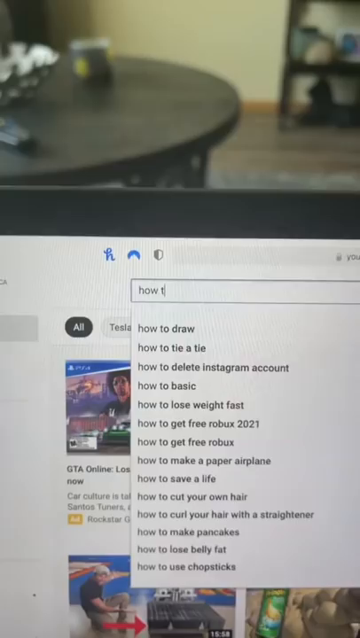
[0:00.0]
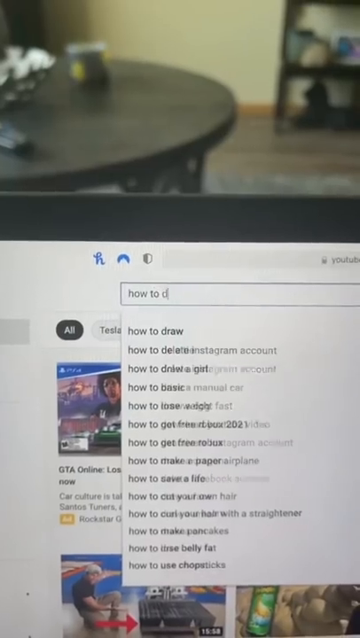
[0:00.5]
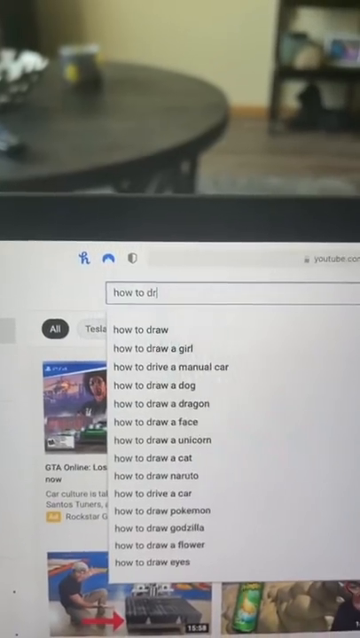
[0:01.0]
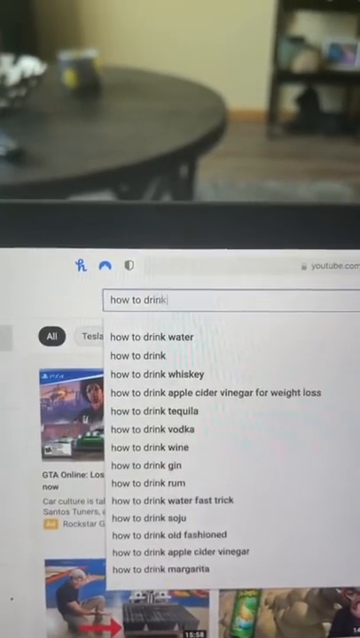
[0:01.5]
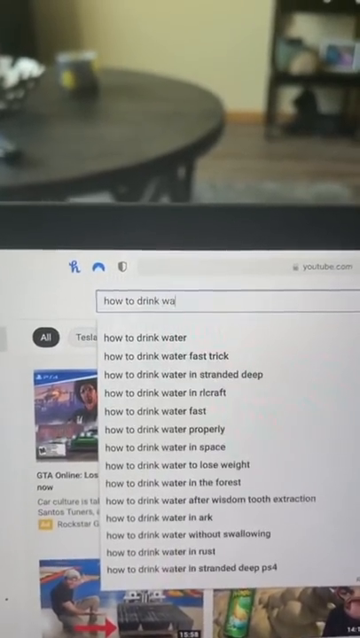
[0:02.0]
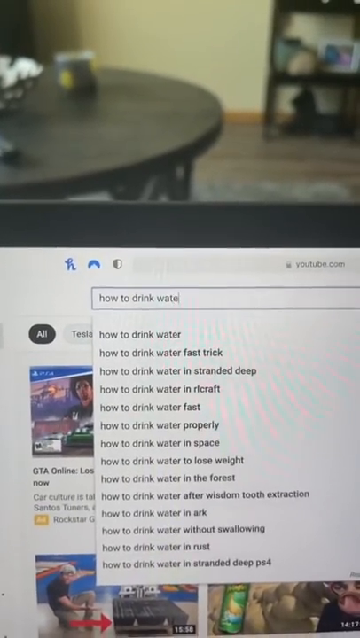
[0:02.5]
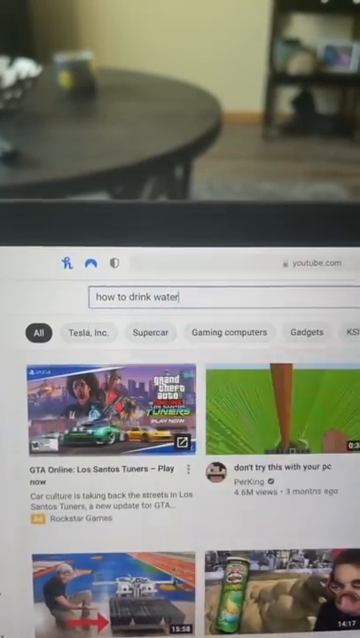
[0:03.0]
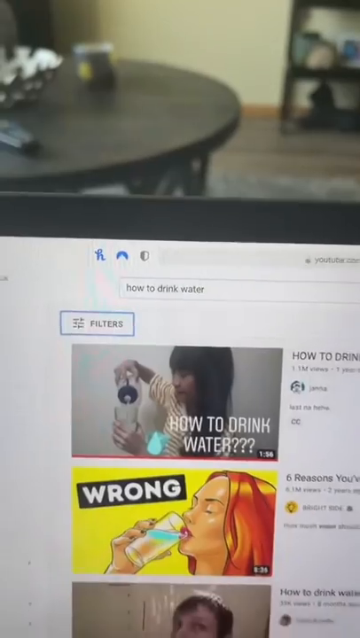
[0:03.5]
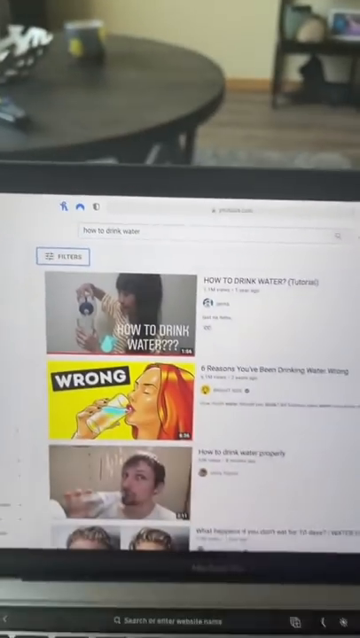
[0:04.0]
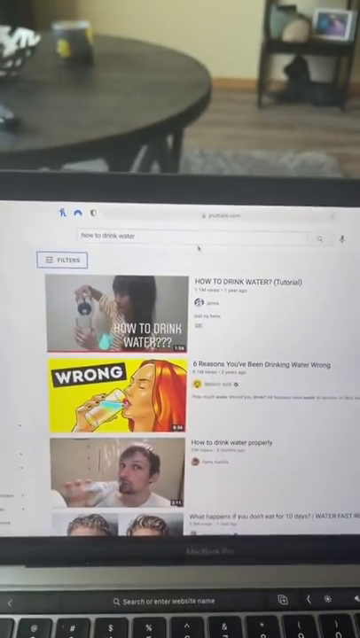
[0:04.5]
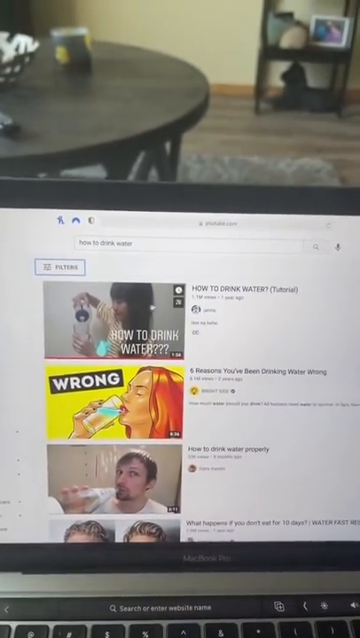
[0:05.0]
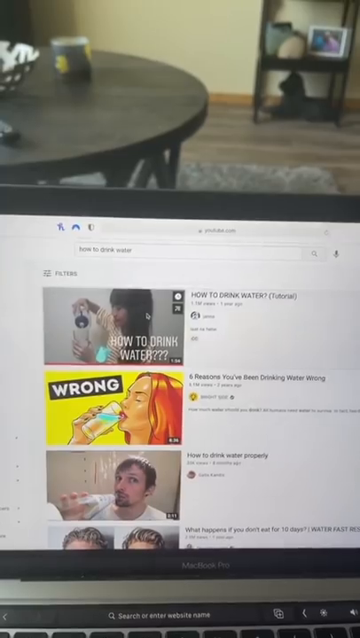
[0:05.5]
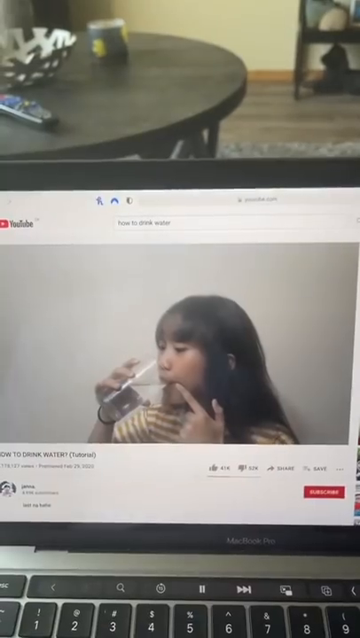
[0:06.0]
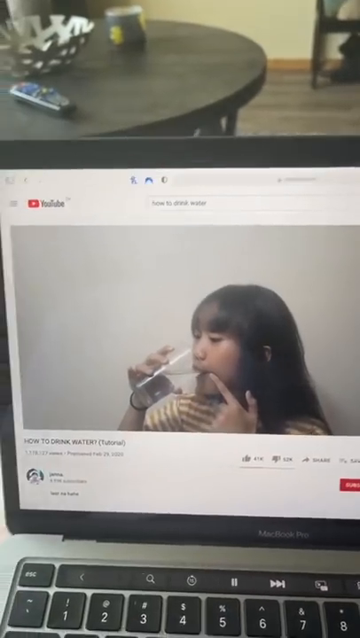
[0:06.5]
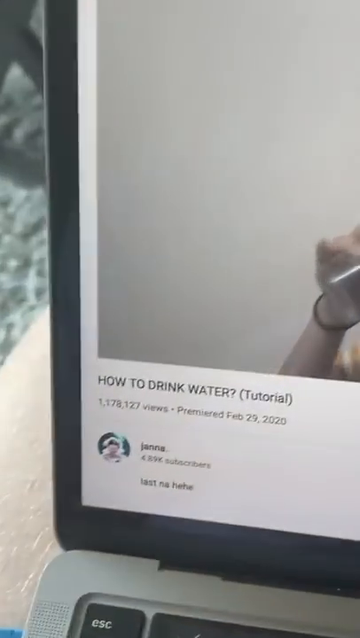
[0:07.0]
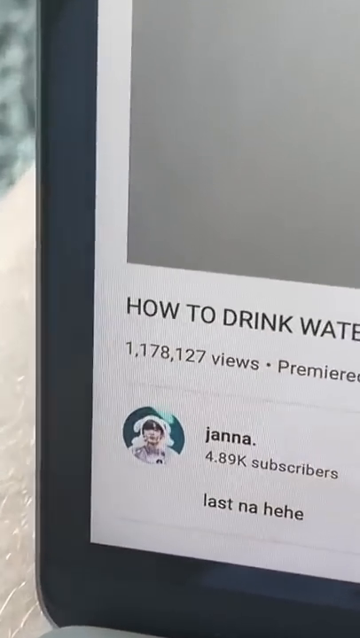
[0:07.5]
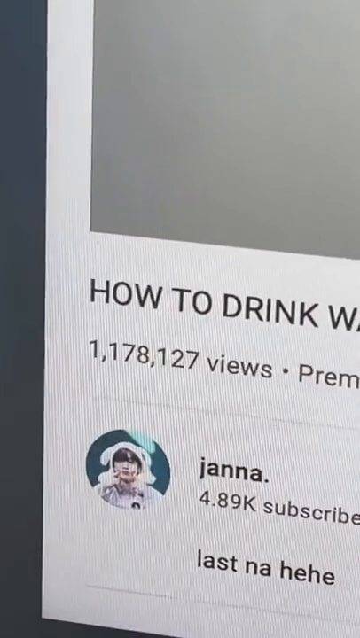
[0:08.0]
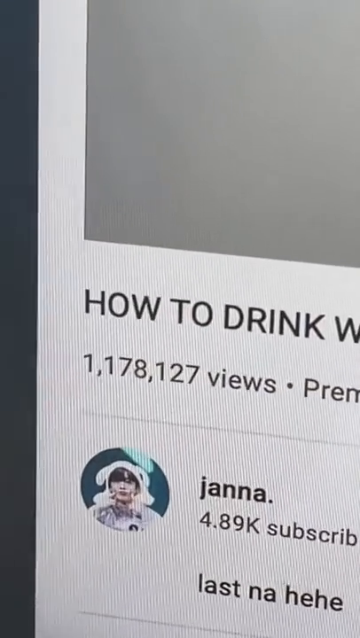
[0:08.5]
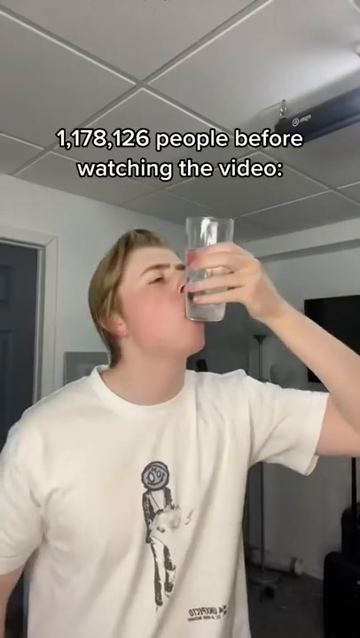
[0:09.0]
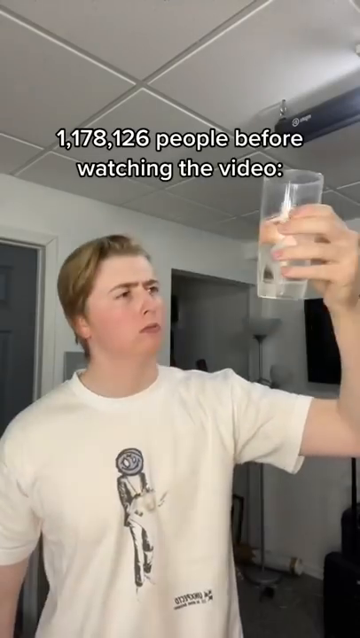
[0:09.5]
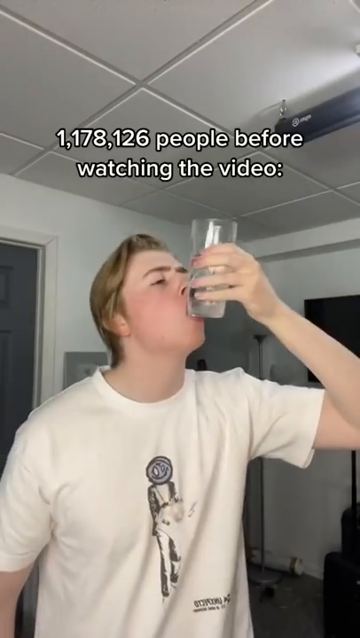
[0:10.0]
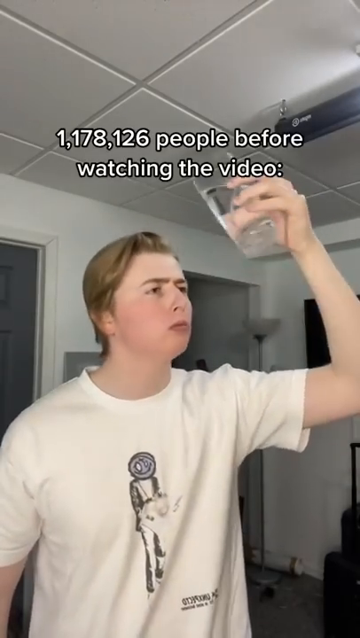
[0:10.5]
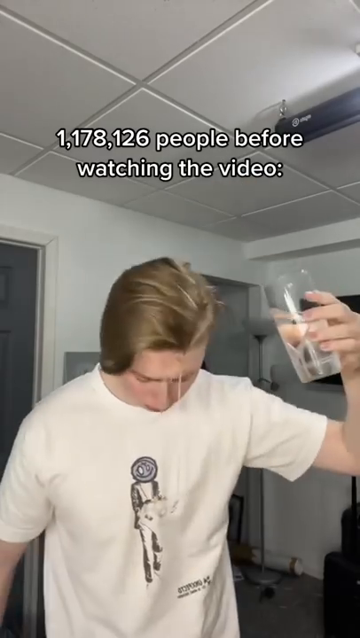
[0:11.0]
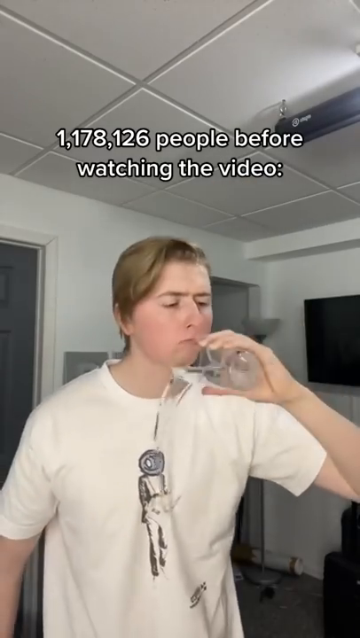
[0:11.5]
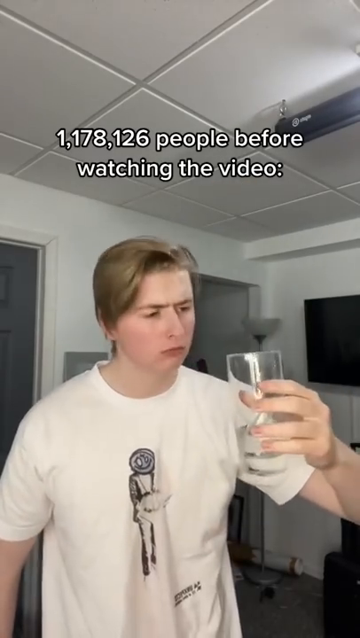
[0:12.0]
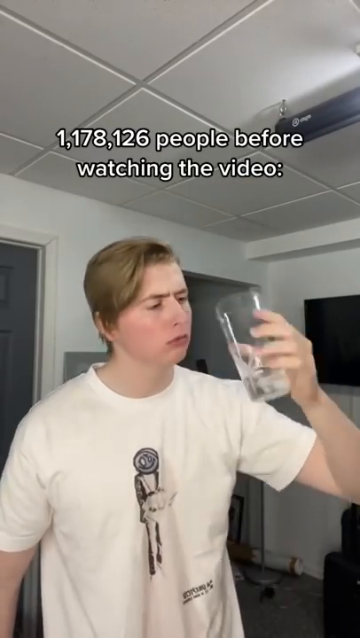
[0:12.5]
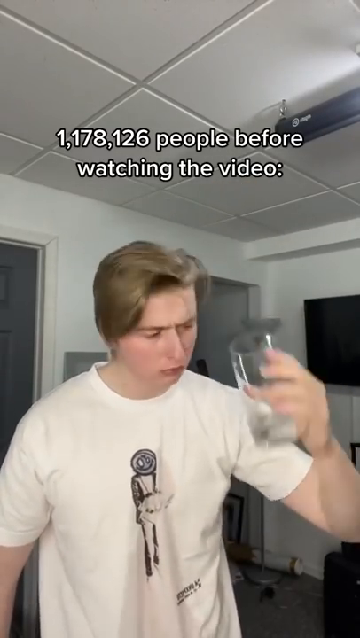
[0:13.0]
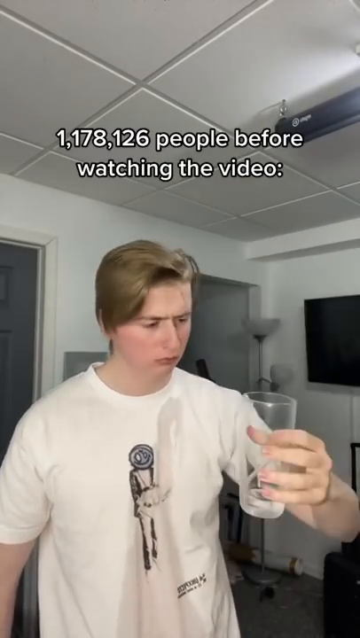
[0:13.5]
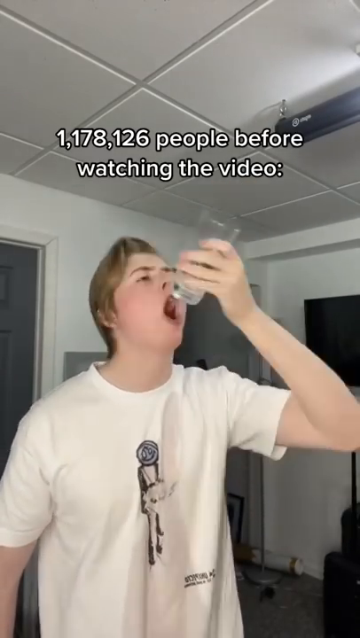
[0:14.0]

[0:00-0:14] The video, titled How to Drink Water, is a short. Someone types "how to drink water" into a search bar, which brings up different videos. The first shows a girl holding her finger up to her mouth and drinking water; her video has 1.7 million views and is a year old. Next comes a video of a teenage boy with his lips at the bottom of the glass. Text reads "1,178,126 people before watching the video didn't know how to drink water," and they started from the bottom of the glass. The boy then takes the glass and dumps some water over his head, looks down, and dumps some on the front of his shirt. He doesn't know how to drink water, and he then has a confused look on his face about how to drink water from a glass.